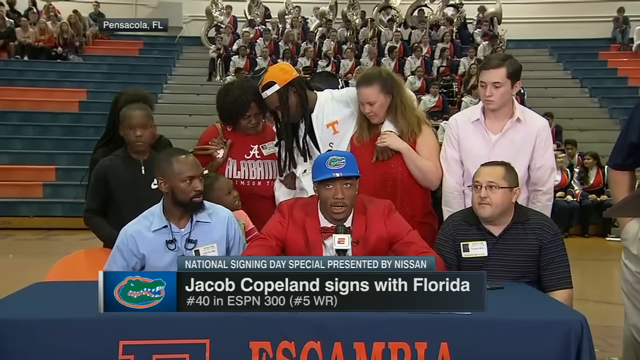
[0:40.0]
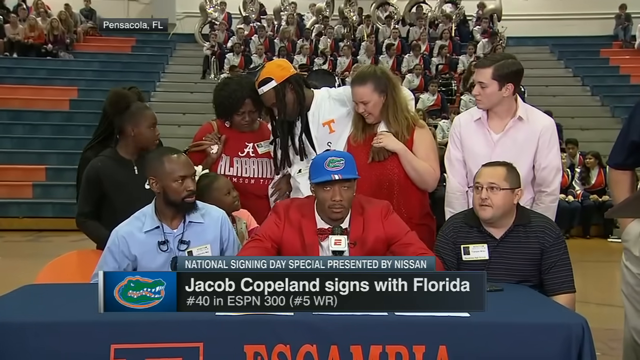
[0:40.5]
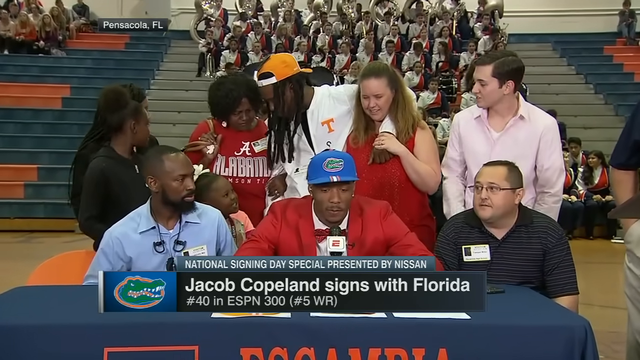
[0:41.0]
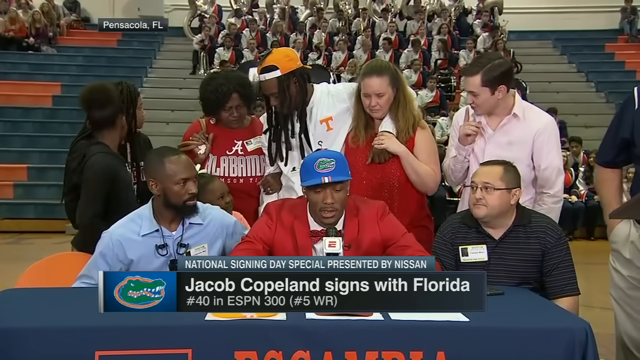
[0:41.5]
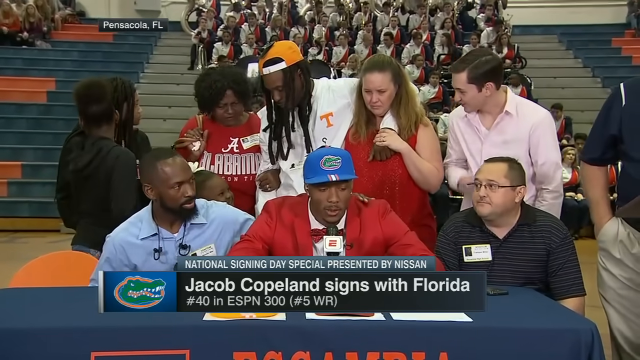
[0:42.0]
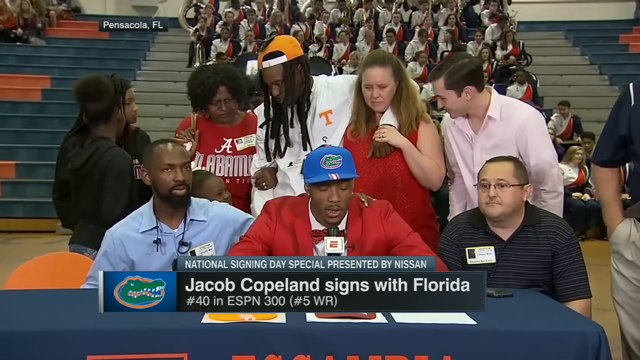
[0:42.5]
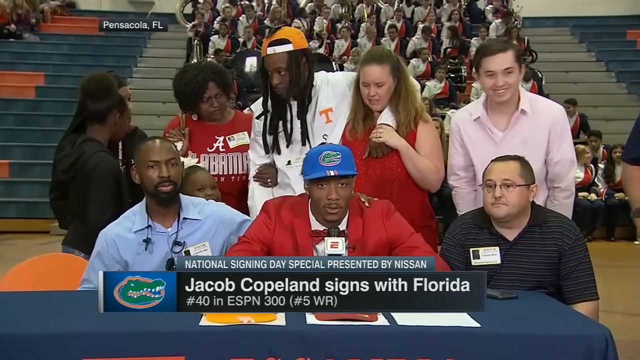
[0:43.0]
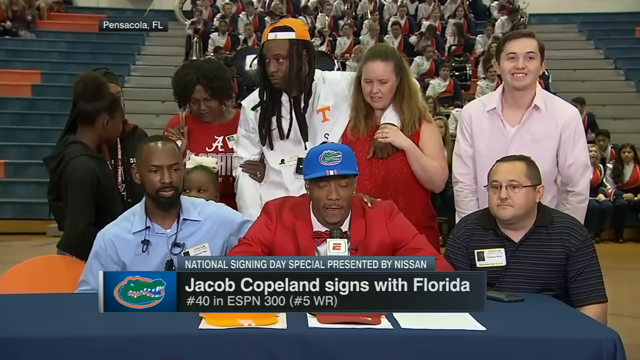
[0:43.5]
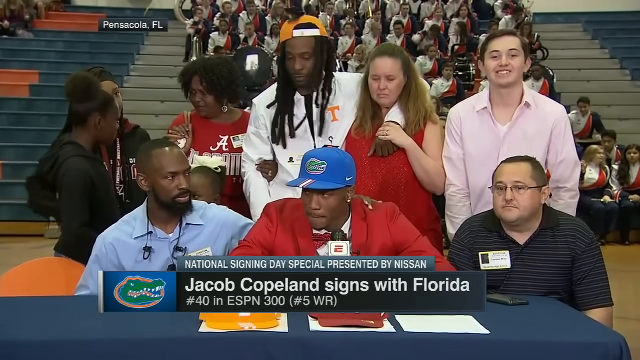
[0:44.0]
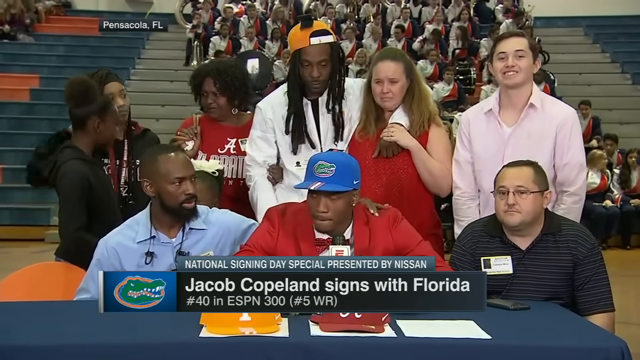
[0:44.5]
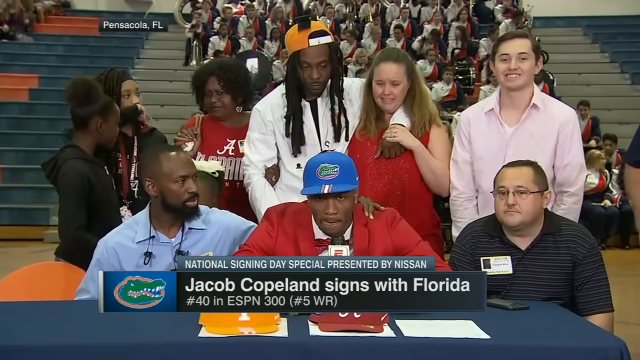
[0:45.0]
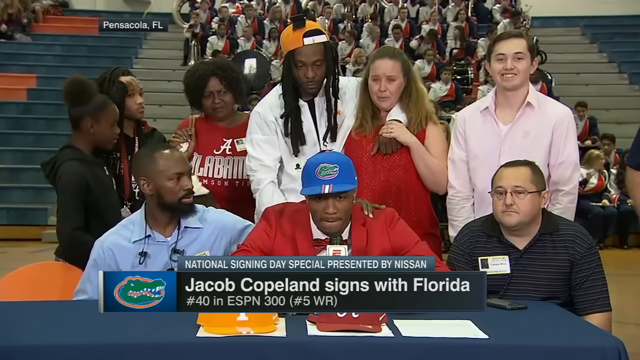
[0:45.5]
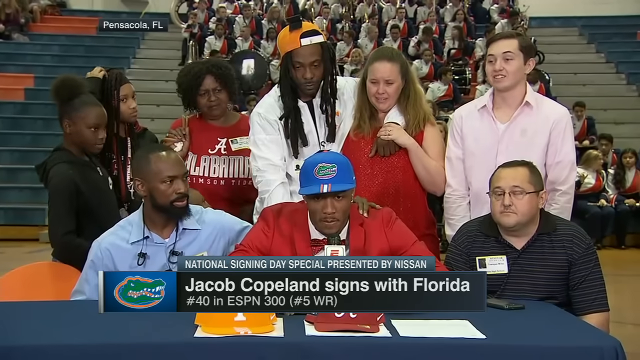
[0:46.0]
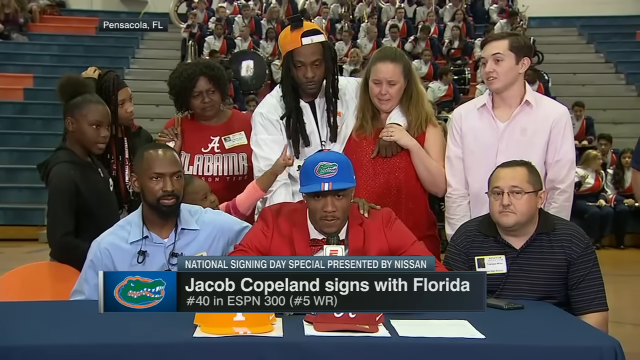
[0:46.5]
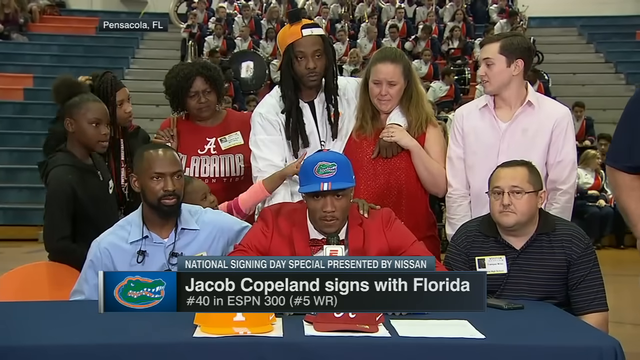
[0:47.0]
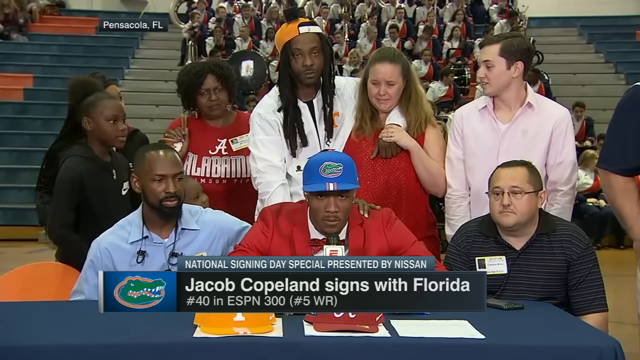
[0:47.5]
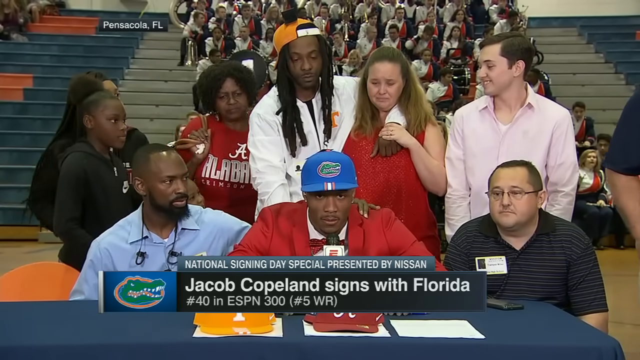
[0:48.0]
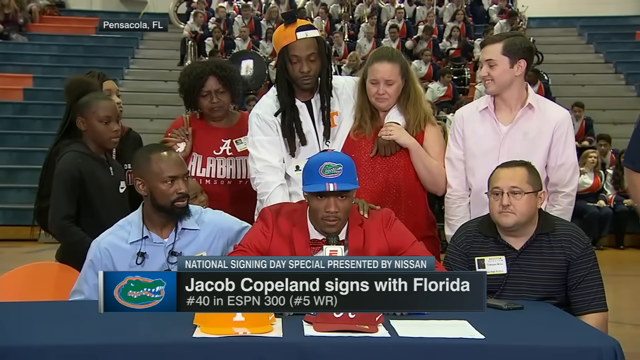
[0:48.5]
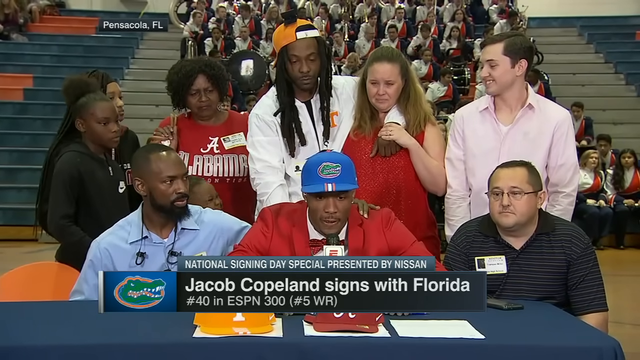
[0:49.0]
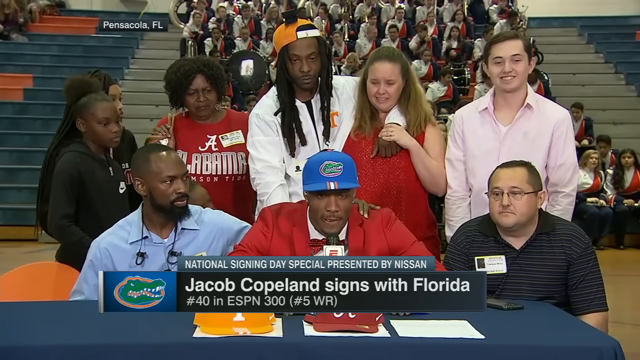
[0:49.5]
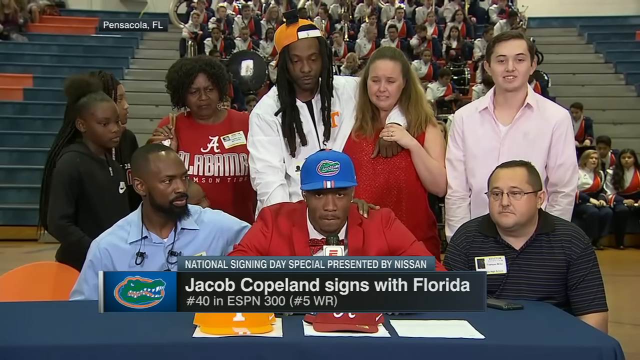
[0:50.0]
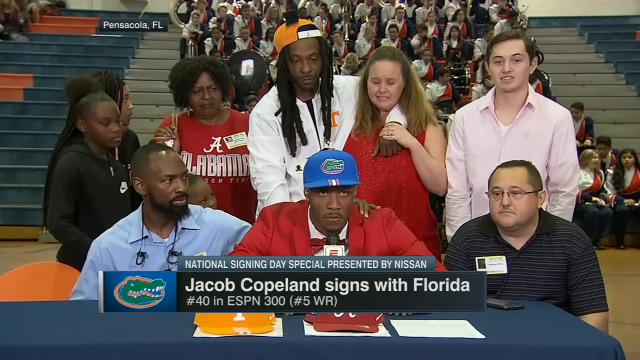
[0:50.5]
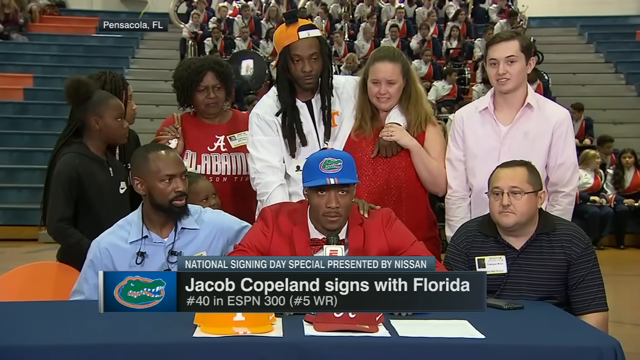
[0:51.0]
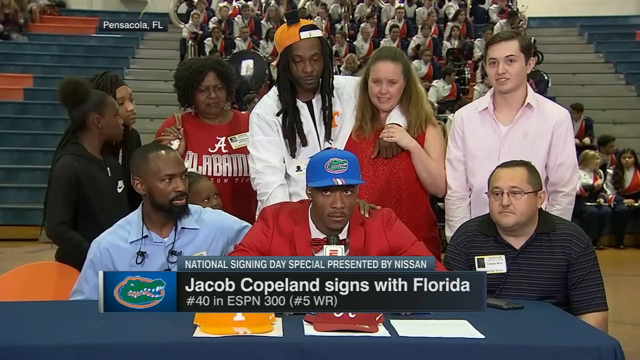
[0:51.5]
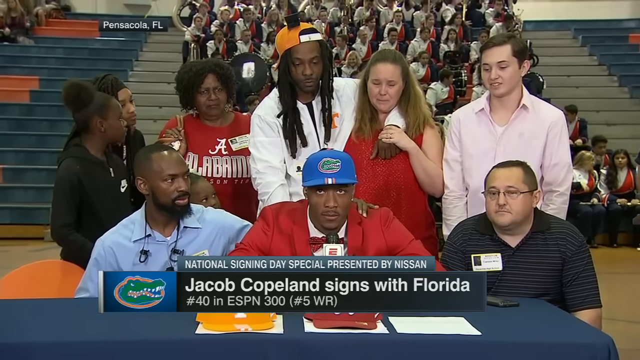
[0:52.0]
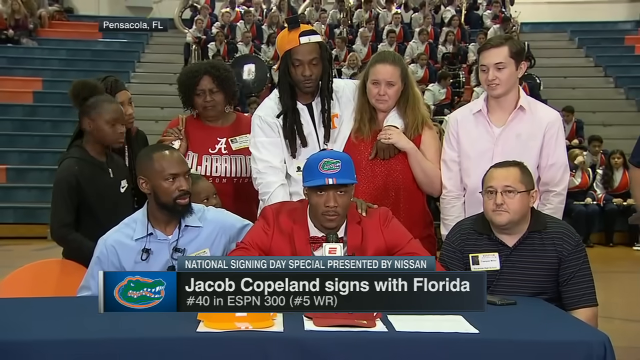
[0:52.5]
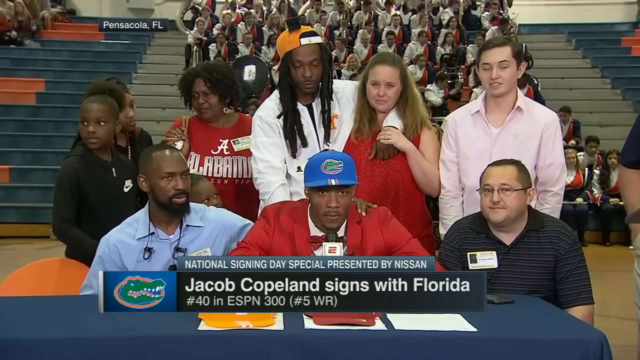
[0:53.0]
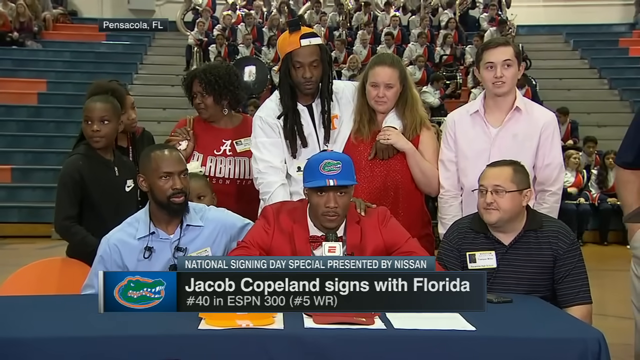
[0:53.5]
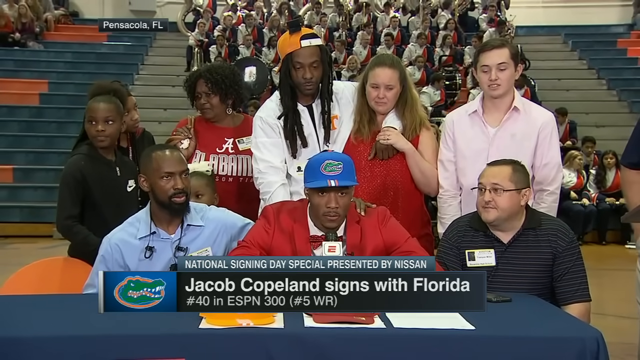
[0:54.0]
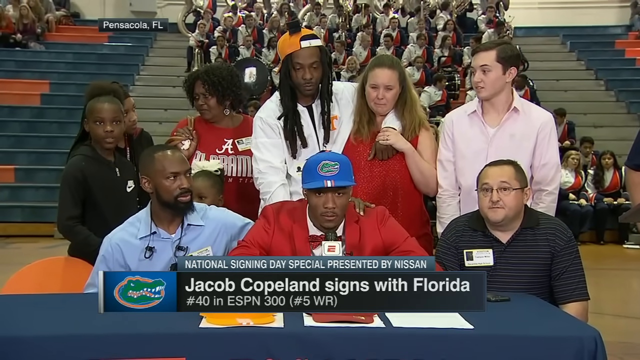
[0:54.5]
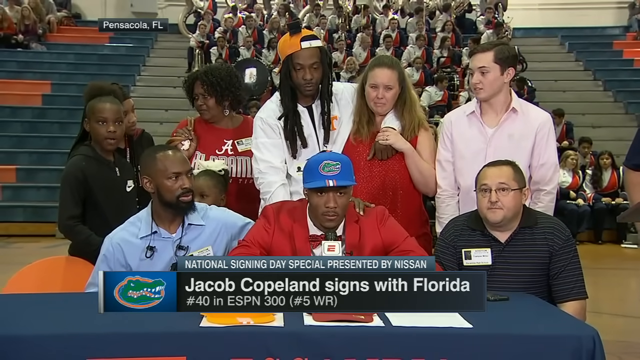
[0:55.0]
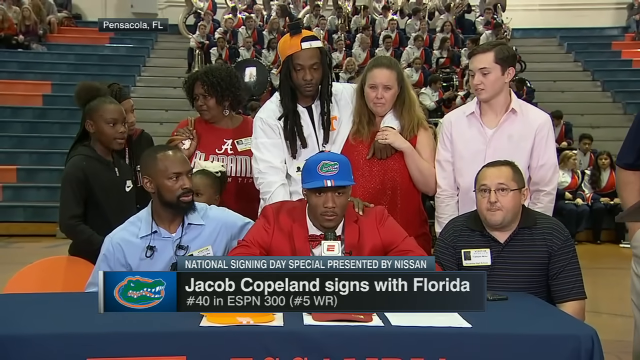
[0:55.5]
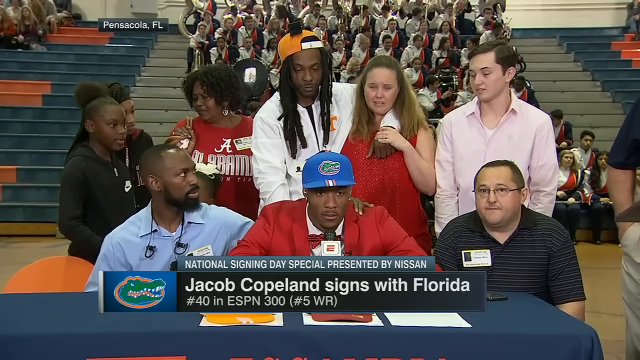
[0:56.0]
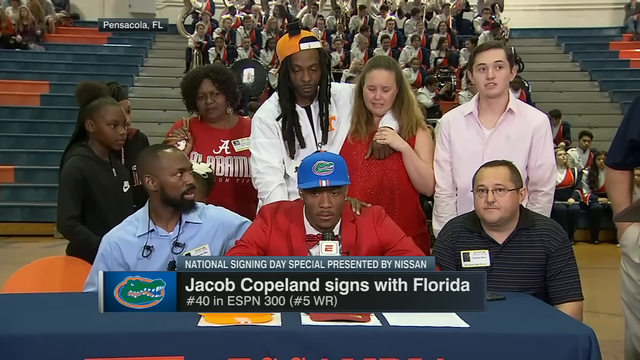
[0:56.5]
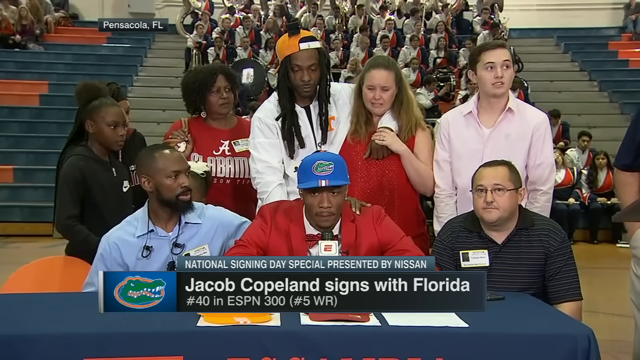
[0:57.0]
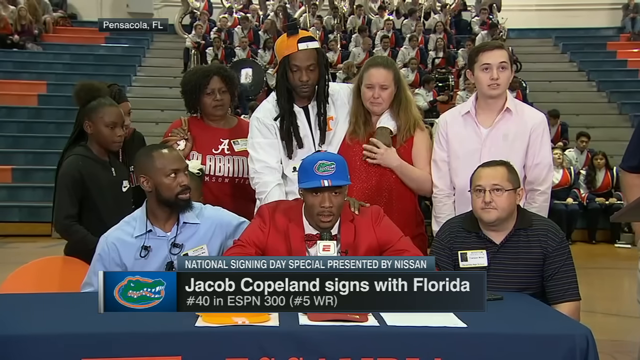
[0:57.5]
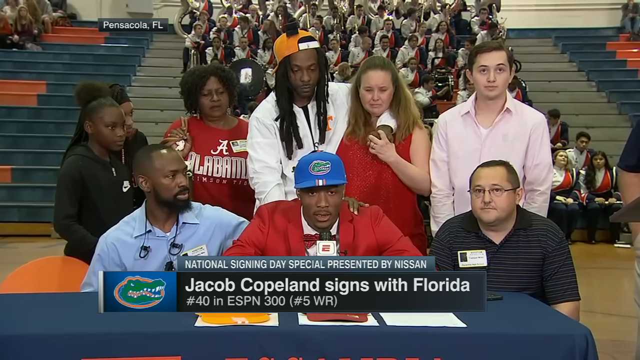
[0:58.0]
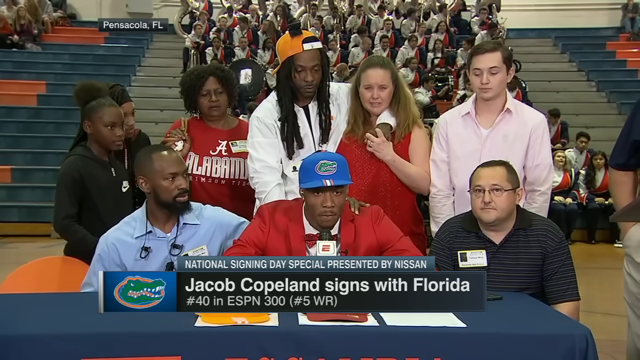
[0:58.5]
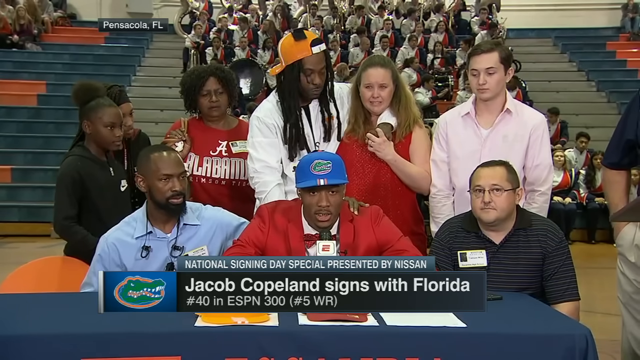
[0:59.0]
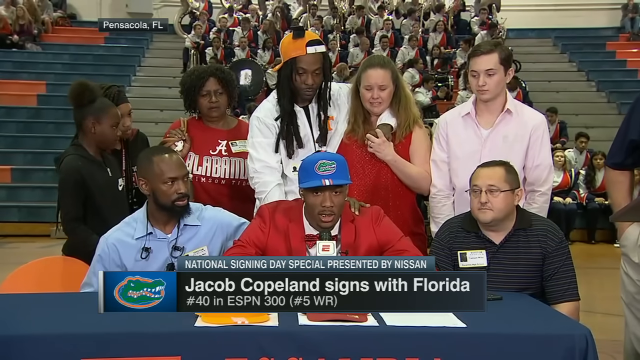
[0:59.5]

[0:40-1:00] Jacob Copeland continues to speak into the microphone. He wears a red sports jacket, a red bow tie, and a Florida Gators cap: a blue cap with the Gators logo in the center surrounded by orange. The people behind and around him are hugging and clearly very excited for him. At one point, the man to his right (the viewer's left) in the blue button-down shirt puts his arm around Copeland as he keeps talking. A woman standing behind Copeland is clearly moved to tears, crying very visibly, and a young man has his left arm around her to comfort her. Toward the back of the auditorium, the marching band is both seated and standing, dressed in red, white and black, presumably school colors, on the left side of the screen. People sit at the top of the bleachers, and the same is true on the right side of the screen. At one point a small black banner appears at the top left of the screen showing the location as Pensacola, Florida.